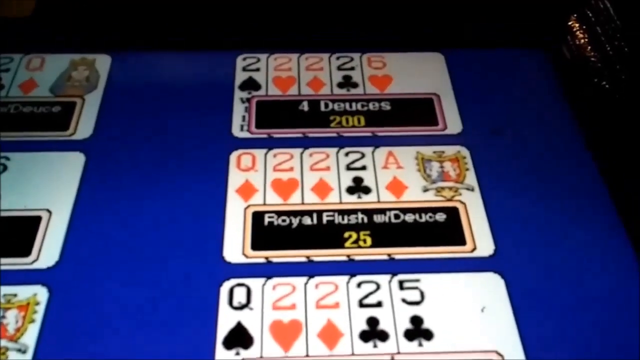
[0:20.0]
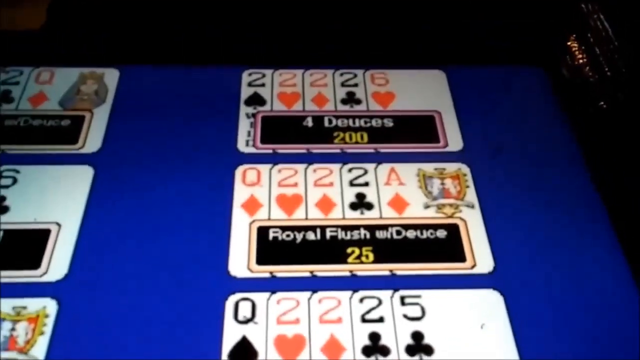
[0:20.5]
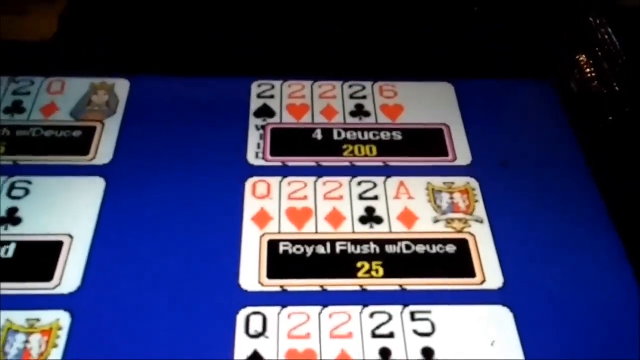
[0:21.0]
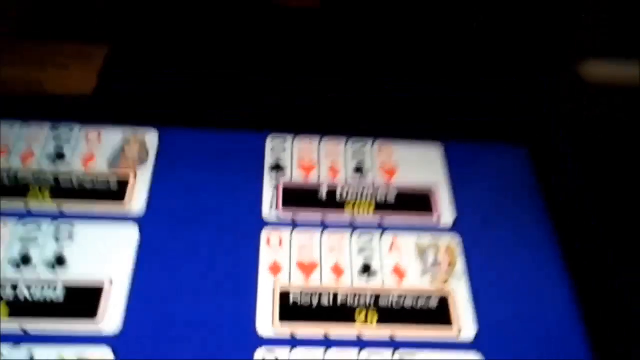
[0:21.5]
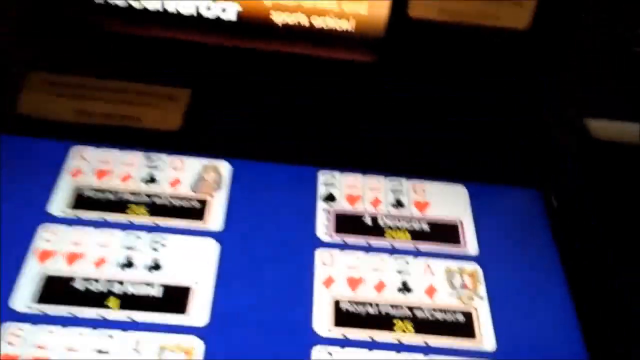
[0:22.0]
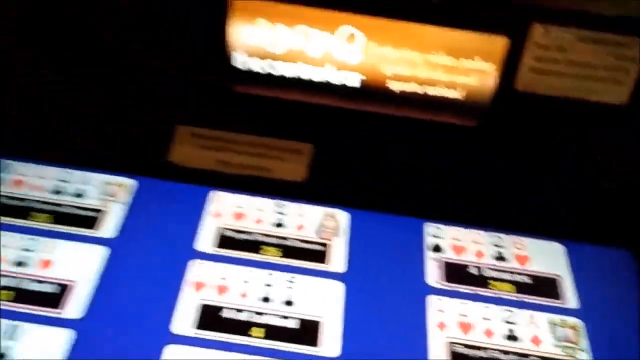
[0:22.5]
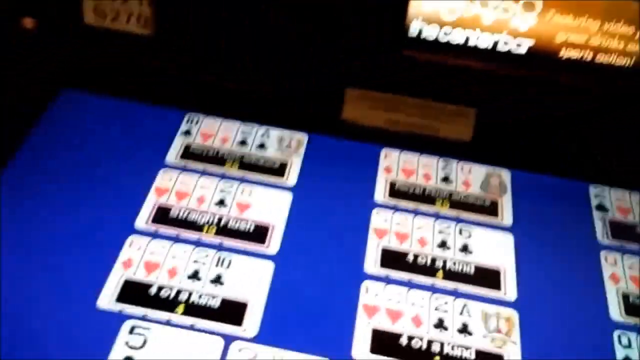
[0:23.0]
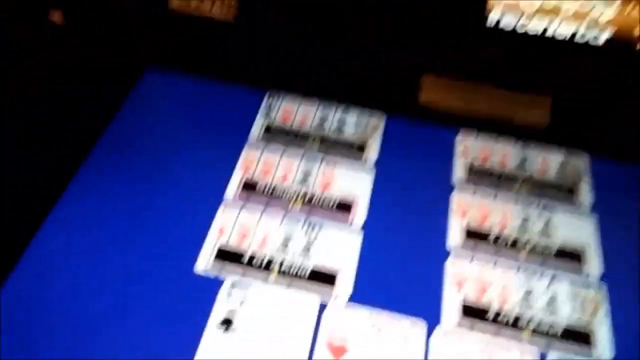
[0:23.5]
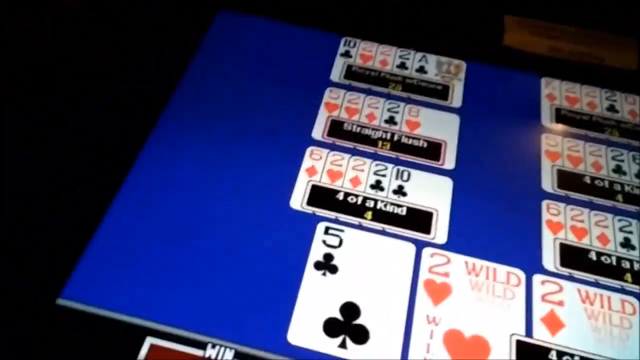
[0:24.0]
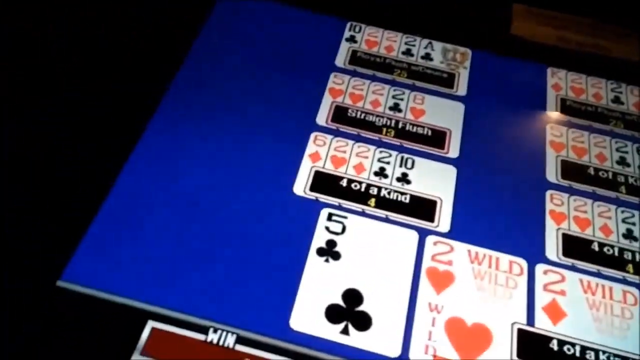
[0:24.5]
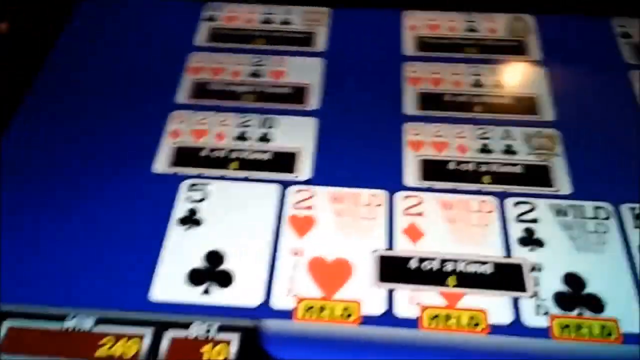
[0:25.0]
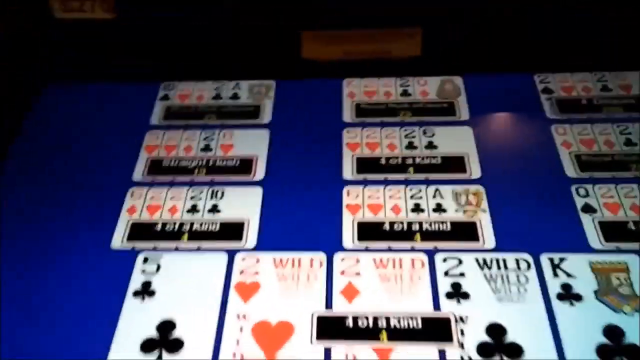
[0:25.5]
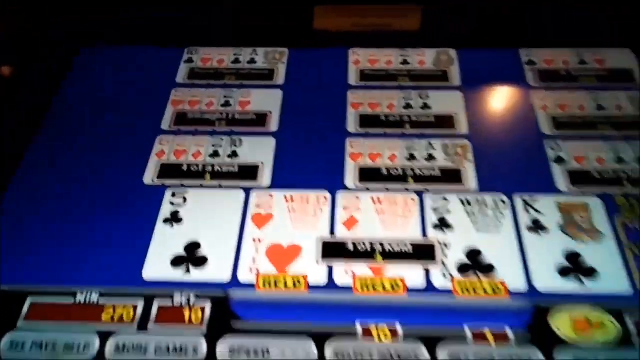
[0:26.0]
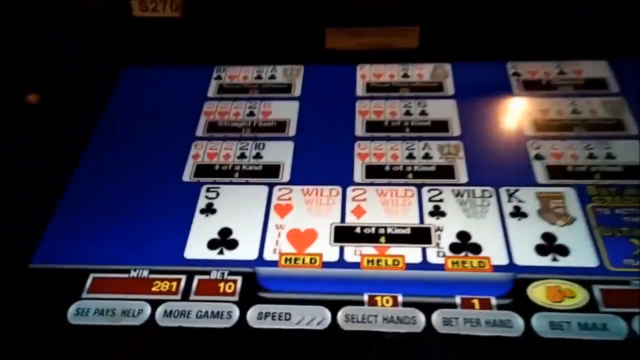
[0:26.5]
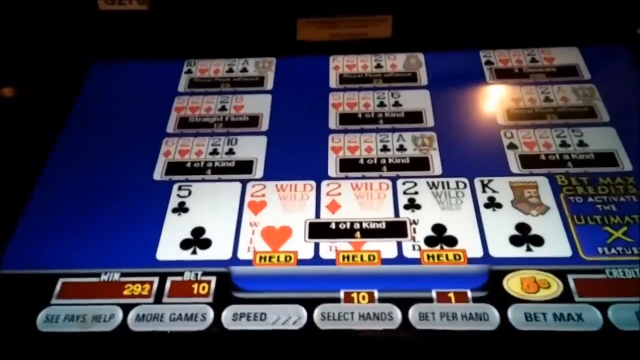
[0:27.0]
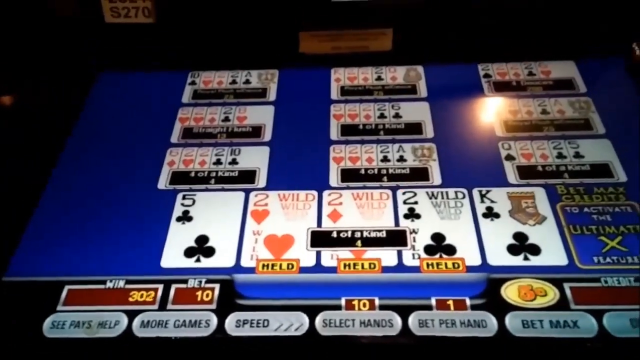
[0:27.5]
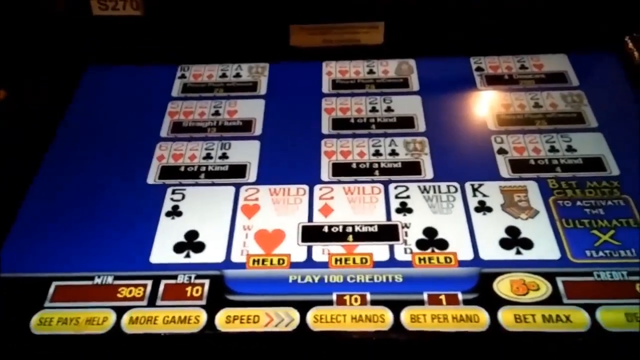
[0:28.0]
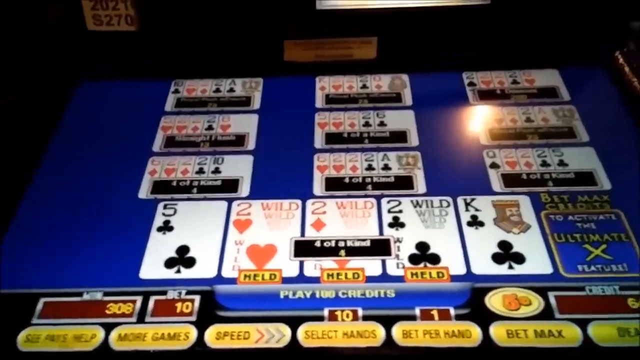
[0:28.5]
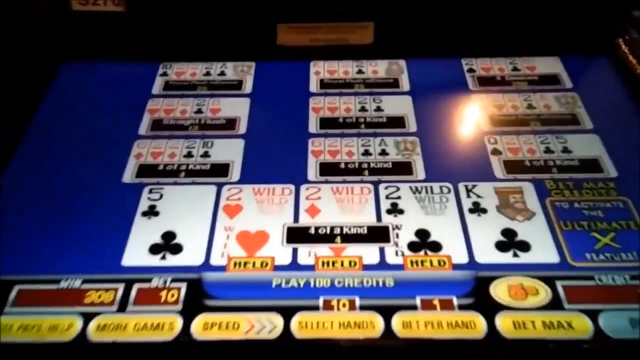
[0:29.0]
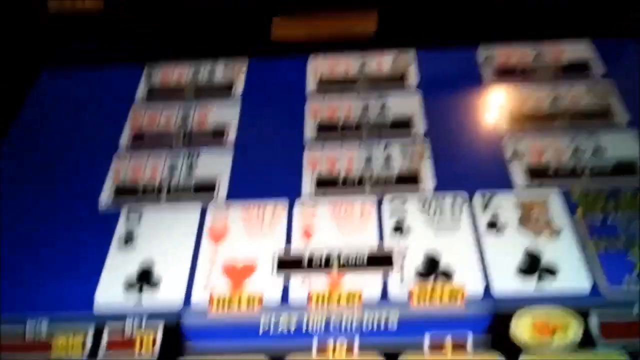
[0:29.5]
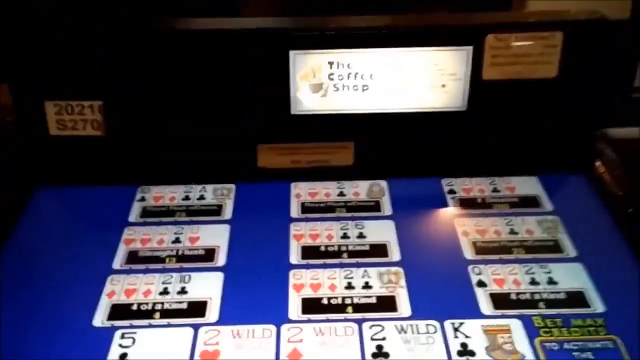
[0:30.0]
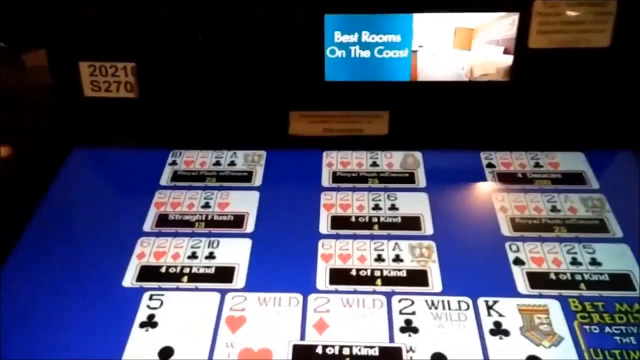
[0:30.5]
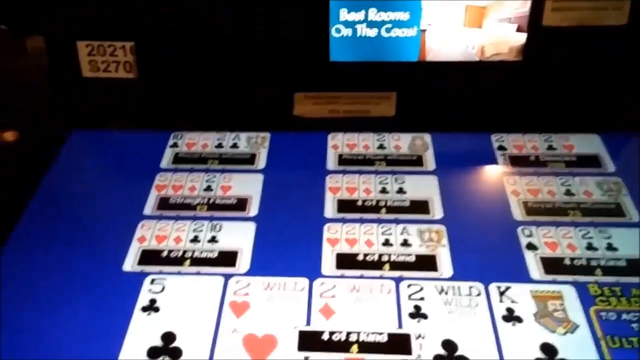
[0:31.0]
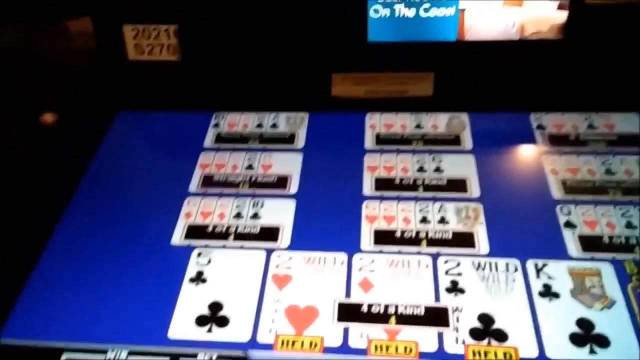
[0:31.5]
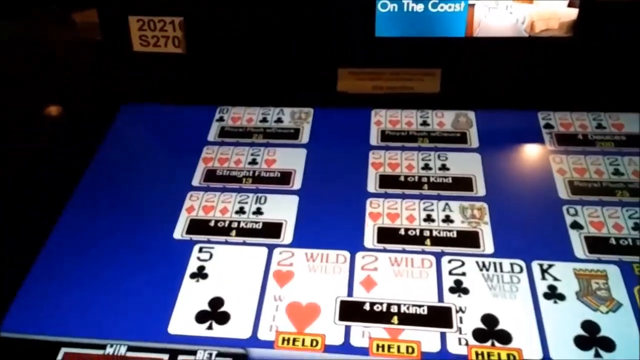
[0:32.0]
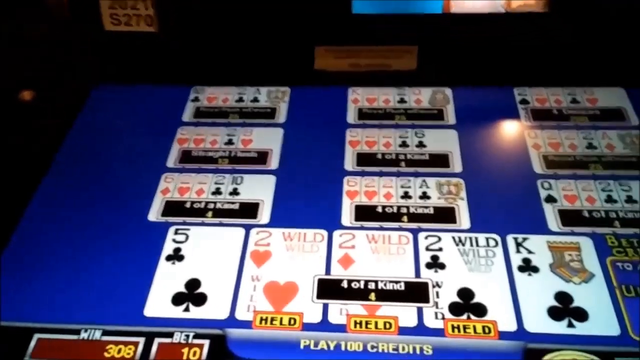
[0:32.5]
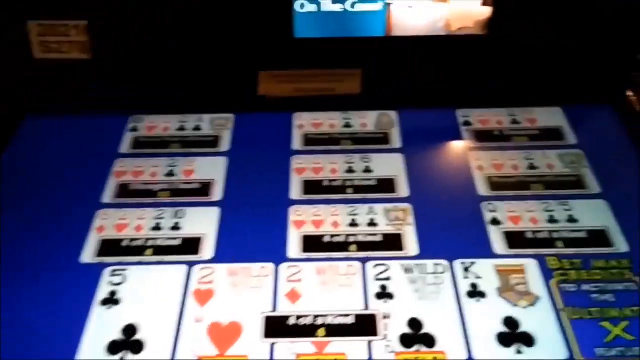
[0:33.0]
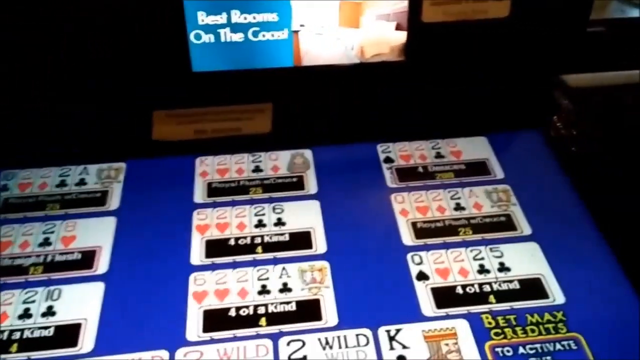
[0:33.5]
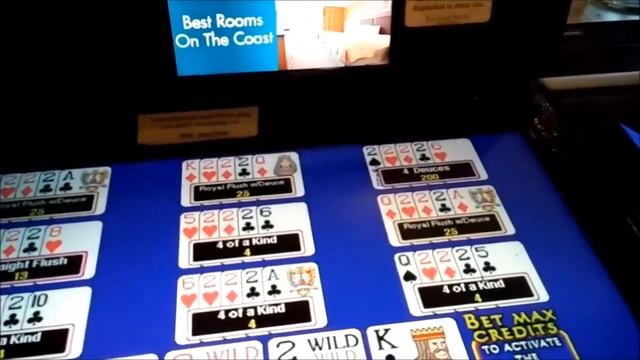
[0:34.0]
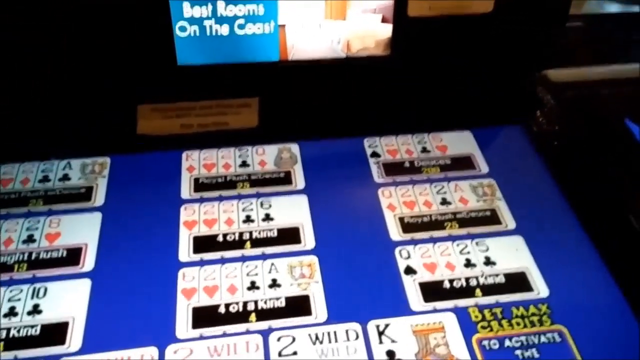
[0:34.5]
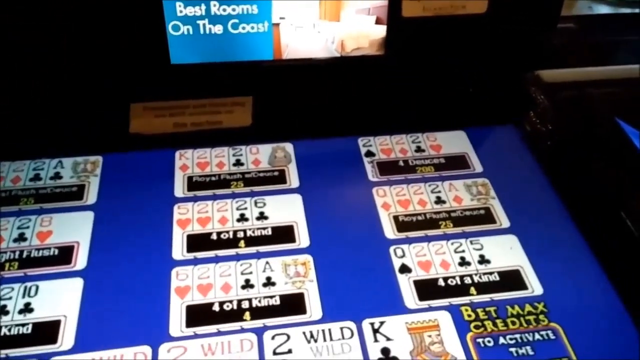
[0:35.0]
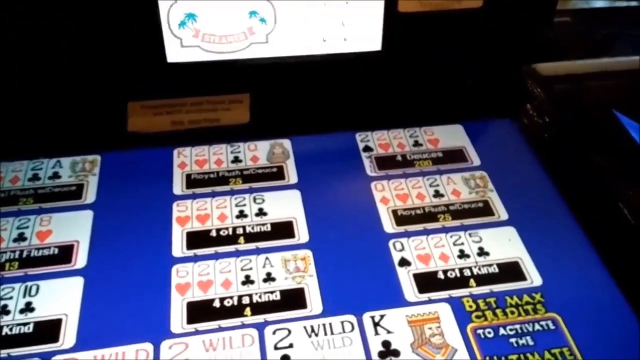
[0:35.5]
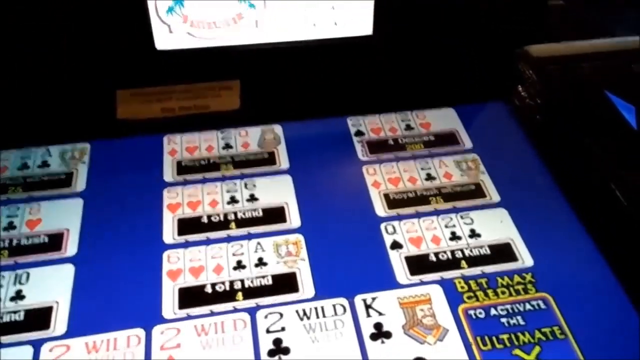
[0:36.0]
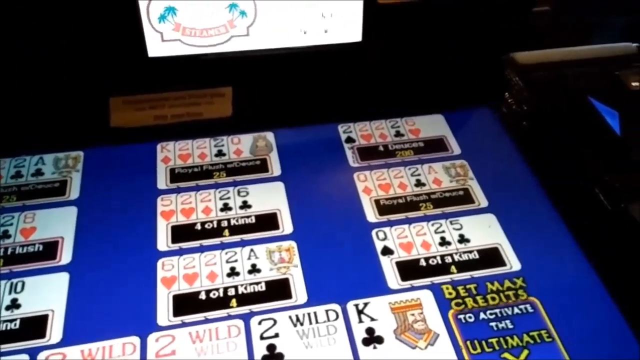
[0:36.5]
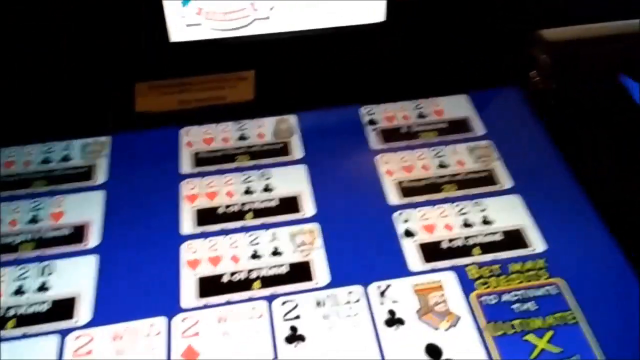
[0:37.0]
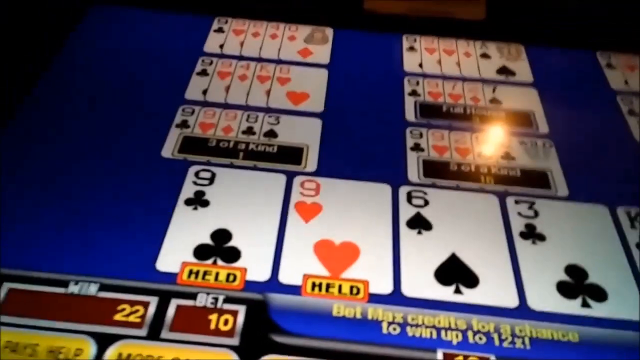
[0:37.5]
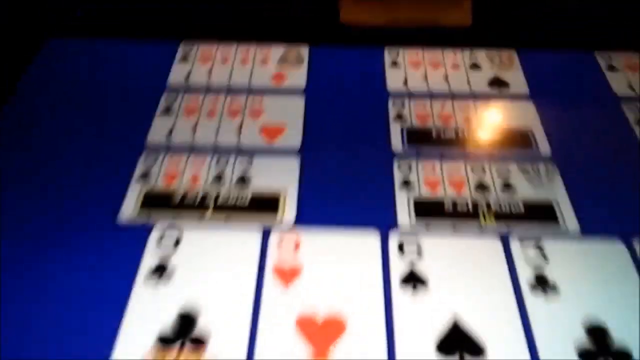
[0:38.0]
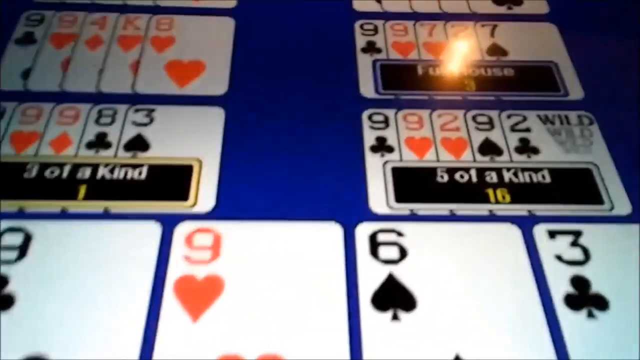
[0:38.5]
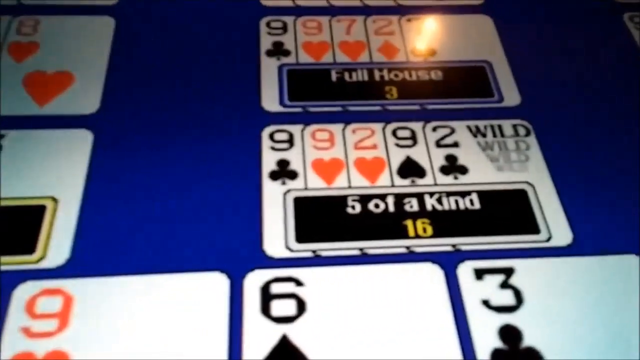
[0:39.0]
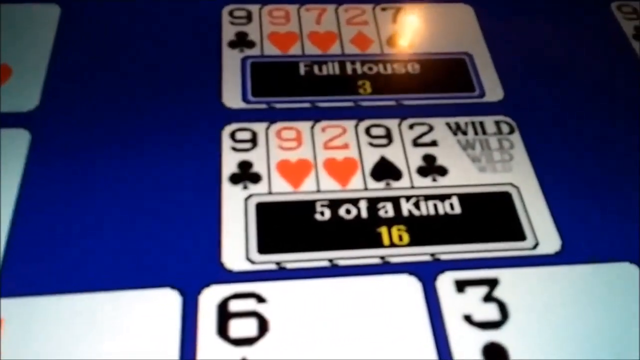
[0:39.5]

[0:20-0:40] The camera is focused on one of the other hands, in the middle right, labeled "royal flush with deuce 25", holding the queen of diamonds, two of hearts, two of diamonds, two of clubs and ace of diamonds. The camera pulls back out to show the player's hand, which has changed slightly with the new cards: the five of clubs, the held two of hearts, two of diamonds and two of clubs, and the king of clubs on the end. The camera hovers over the entire board. It then moves to what appears to be a different hand, with the nine of clubs and nine of hearts, both held, plus the six of spades, the three of clubs and what seems to be the king of clubs. It then zooms in on another hand labeled "five of a kind": the nine of clubs, nine of hearts, two of hearts, nine of spades and two of clubs, with the two of clubs presumably marked wild and serving as any card.